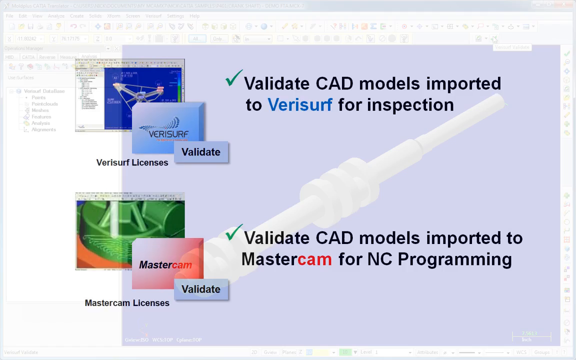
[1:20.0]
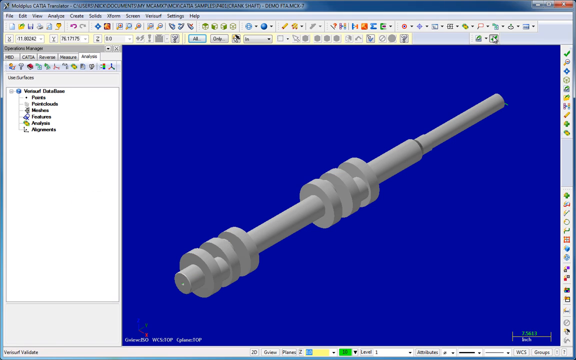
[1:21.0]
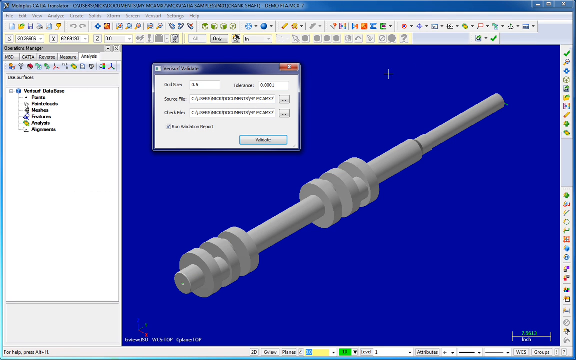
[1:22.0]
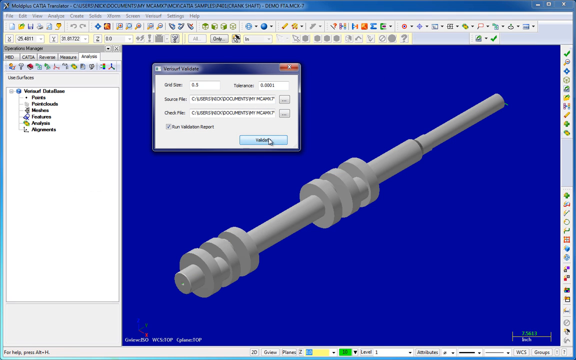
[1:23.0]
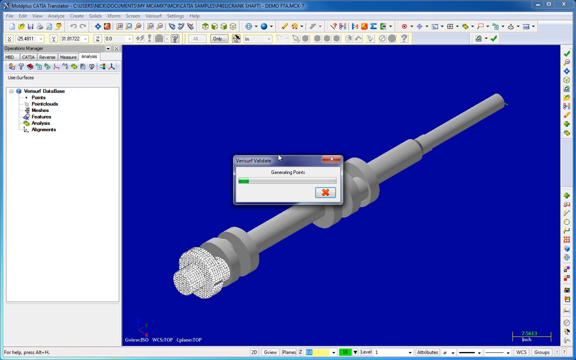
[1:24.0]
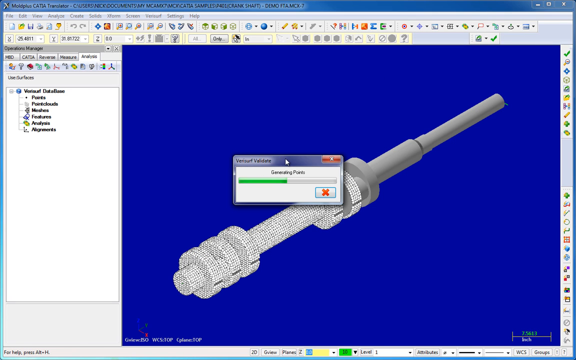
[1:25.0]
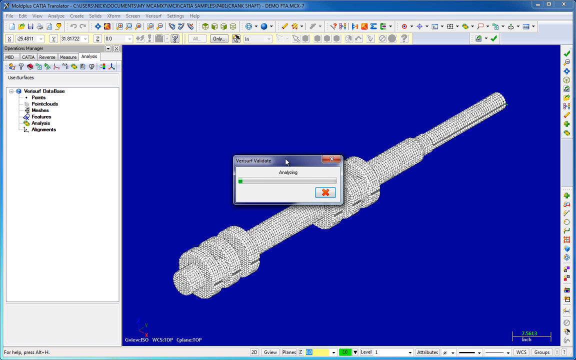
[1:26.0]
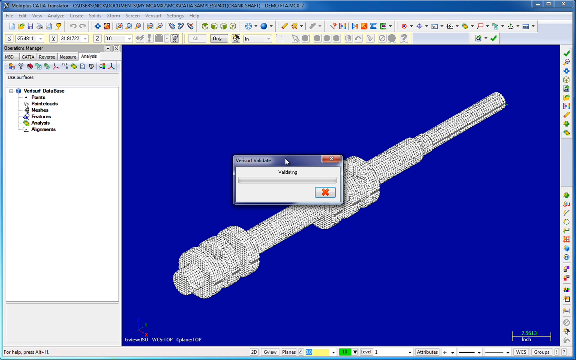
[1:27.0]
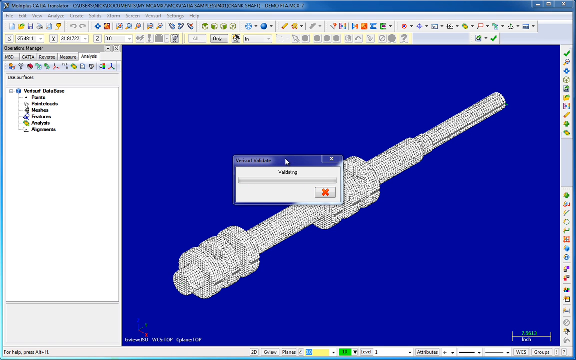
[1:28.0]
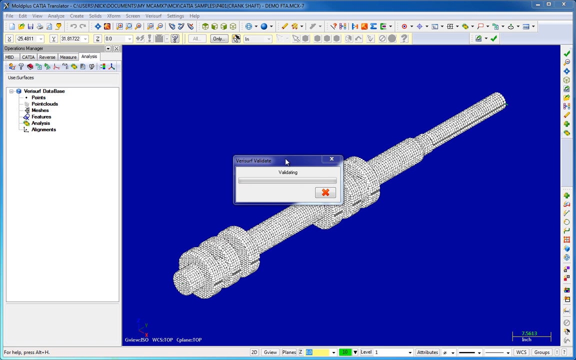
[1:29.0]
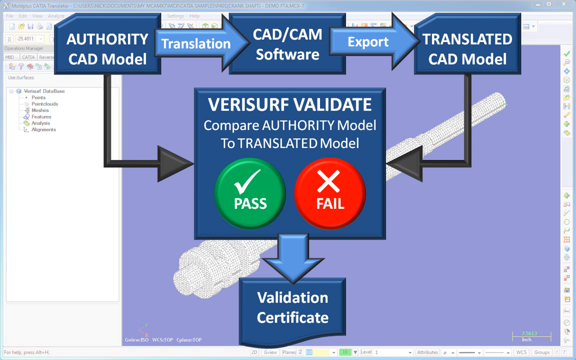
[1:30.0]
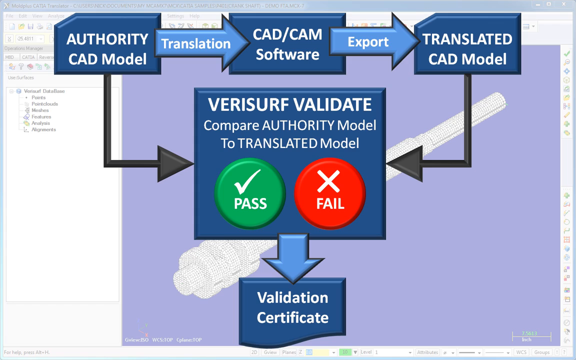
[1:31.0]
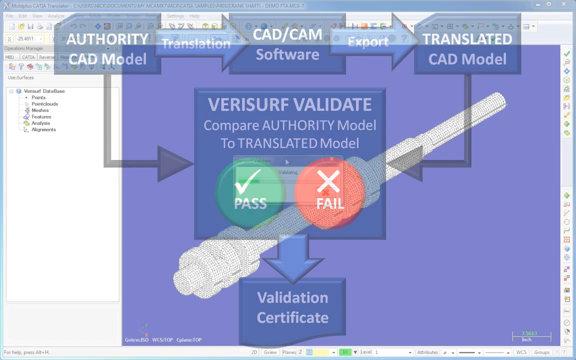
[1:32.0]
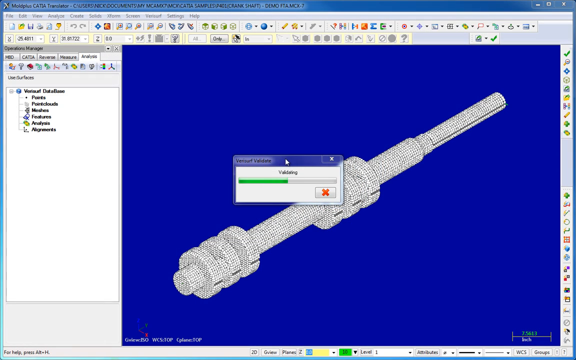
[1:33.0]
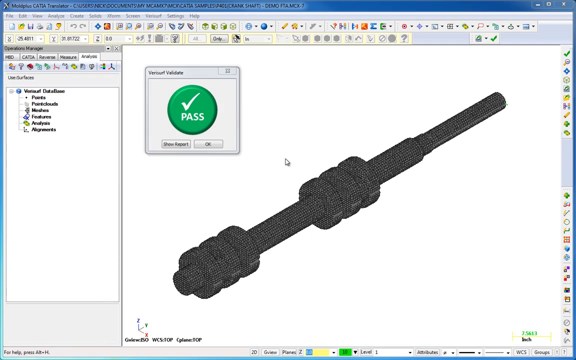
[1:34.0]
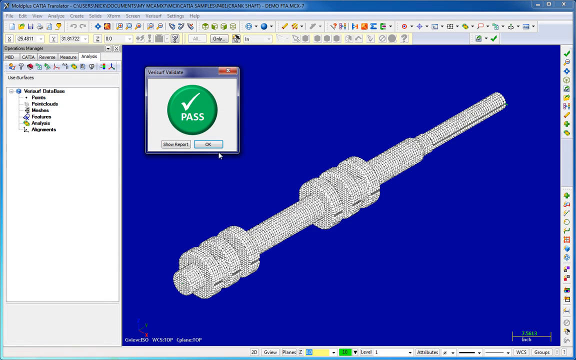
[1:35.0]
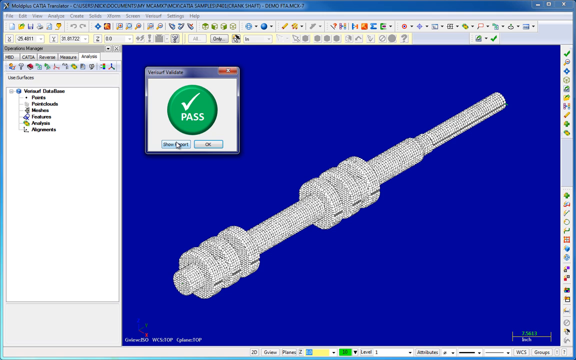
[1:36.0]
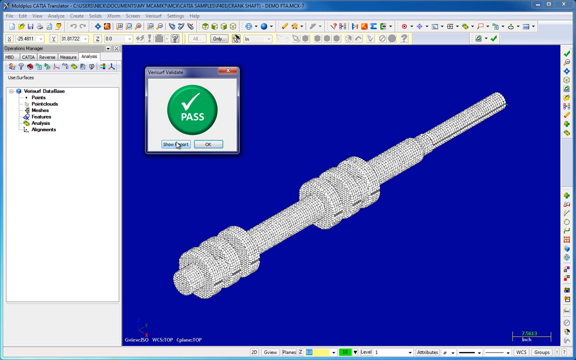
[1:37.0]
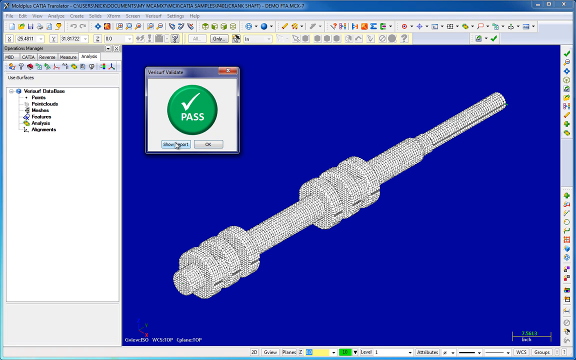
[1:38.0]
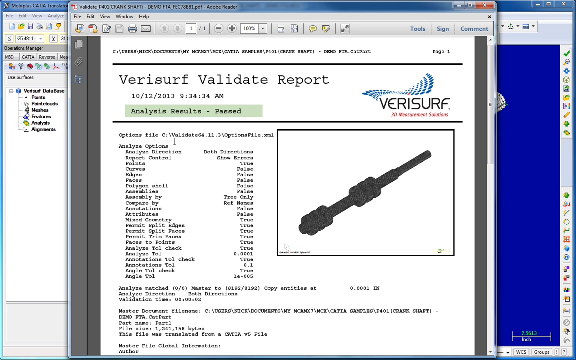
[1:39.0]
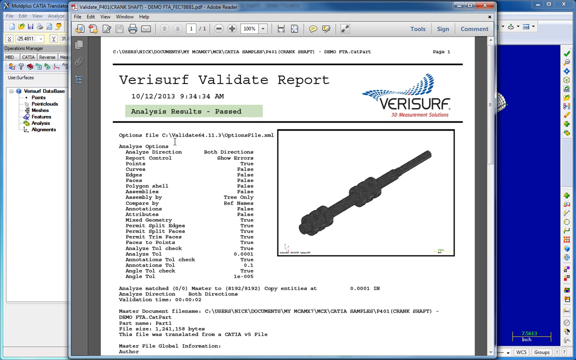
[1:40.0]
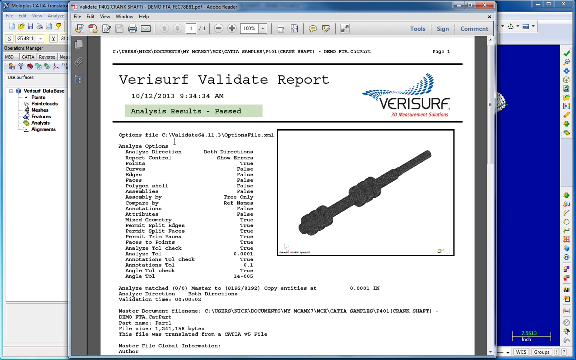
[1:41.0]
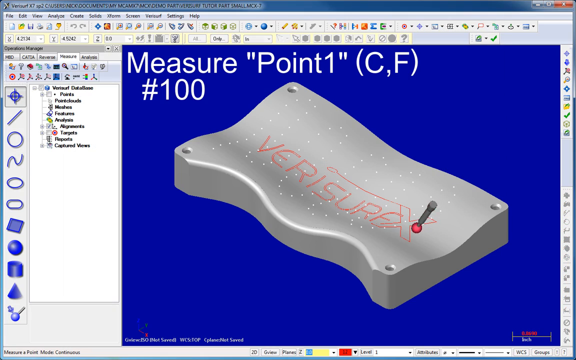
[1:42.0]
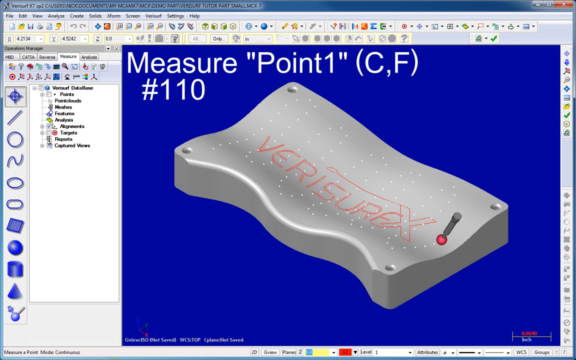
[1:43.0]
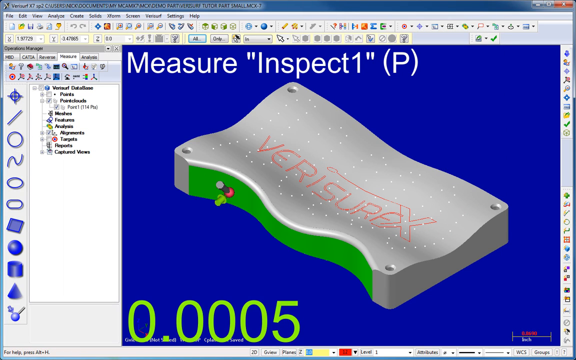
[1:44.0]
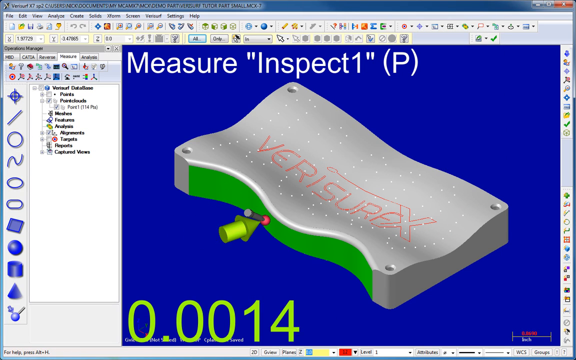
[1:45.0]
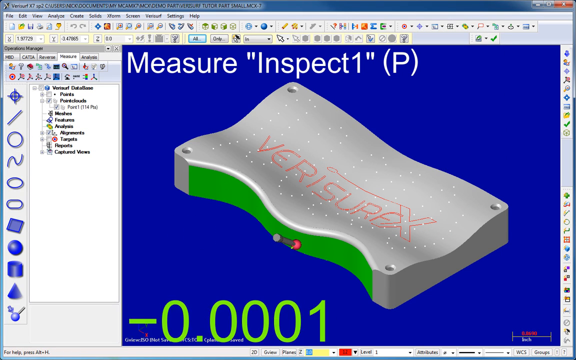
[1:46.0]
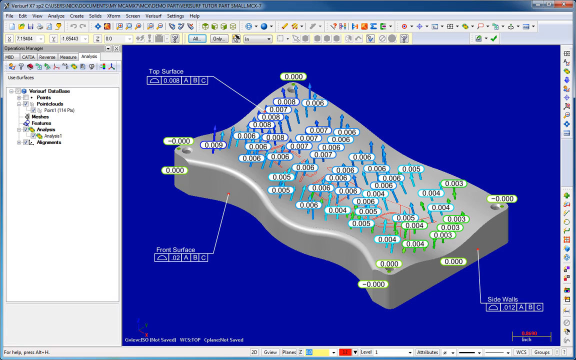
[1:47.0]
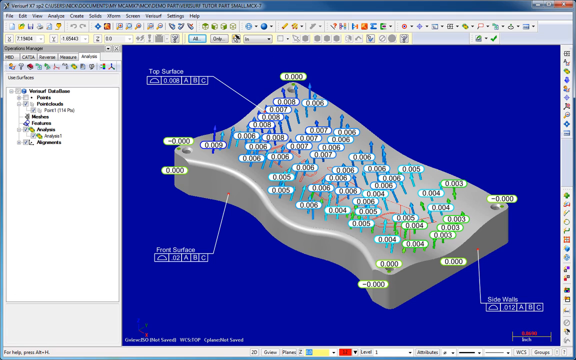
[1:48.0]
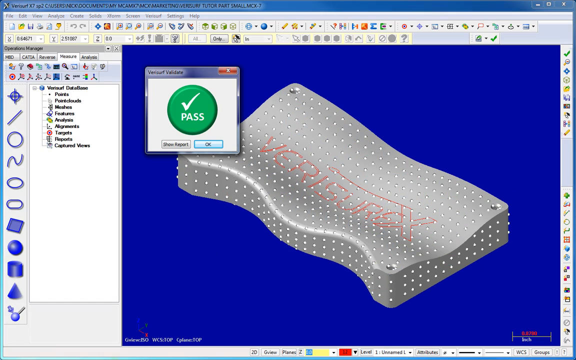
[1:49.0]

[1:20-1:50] VeriSurf seems to be shown as the parts-analyzing software, with emphasis on validating imported CAD models; it apparently checks the base model for errors. The reporting provided once an inspection is done is shown. Mastercam, another of the company's products, appears to be for machining the parts, such as boring out holes. More in-depth ways of checking the parts are shown, giving dimensions in inches related to the product design, how many inches are bored out of the product to fit a specific design, and the depth of the boring.